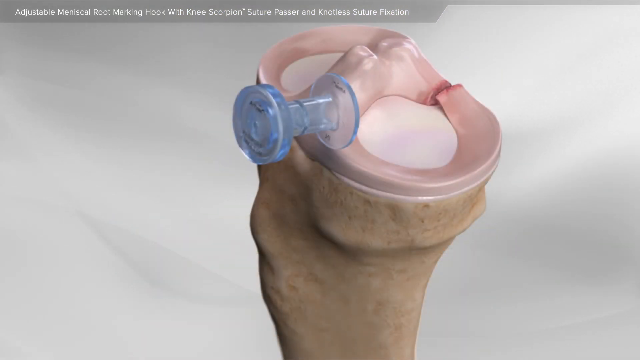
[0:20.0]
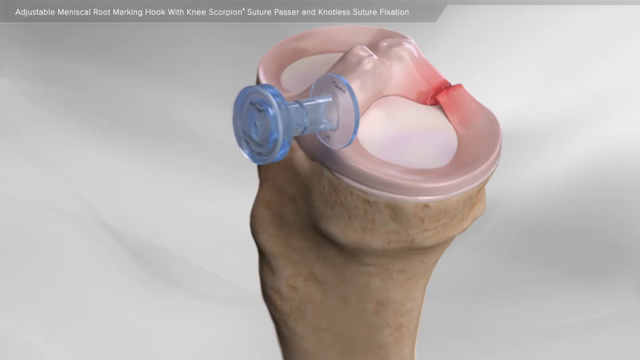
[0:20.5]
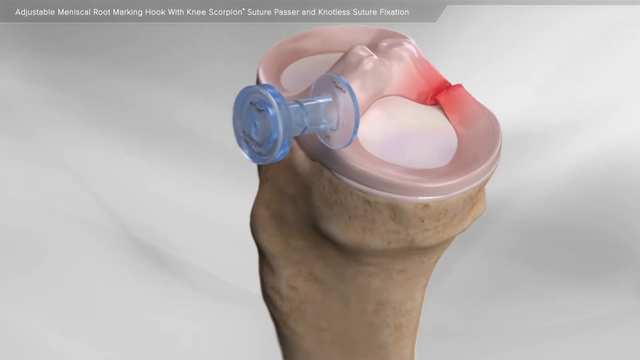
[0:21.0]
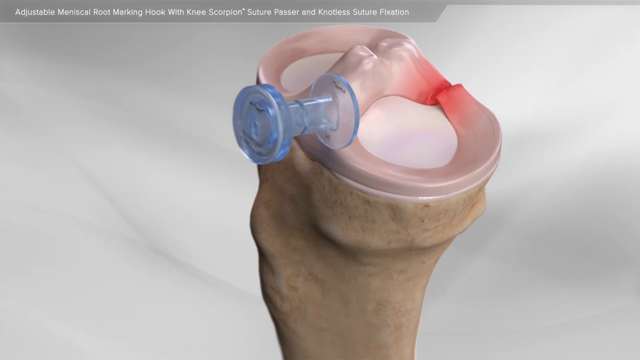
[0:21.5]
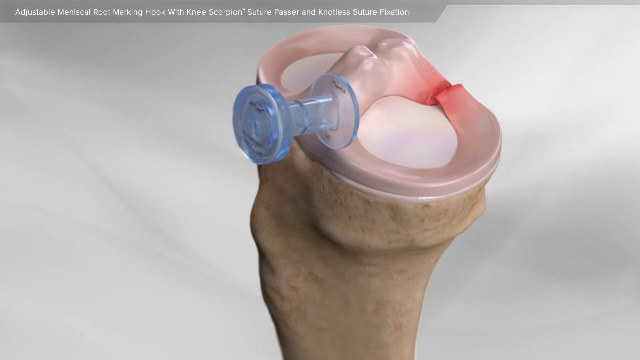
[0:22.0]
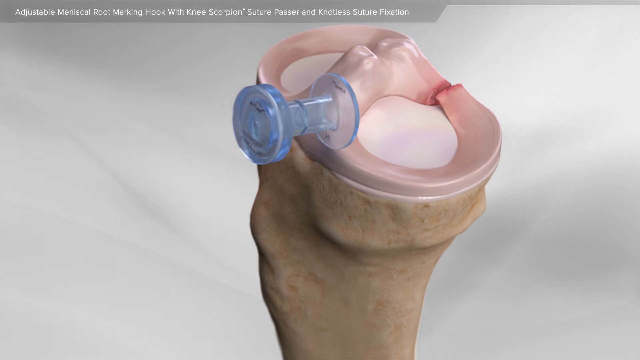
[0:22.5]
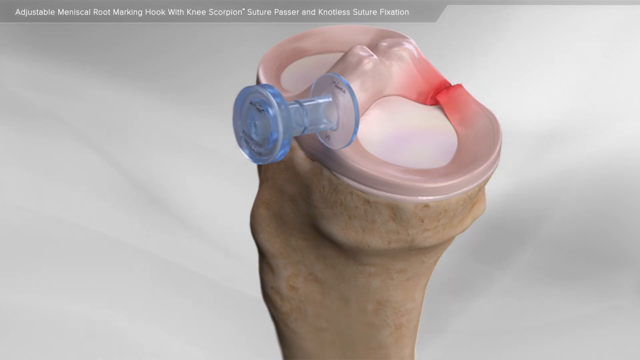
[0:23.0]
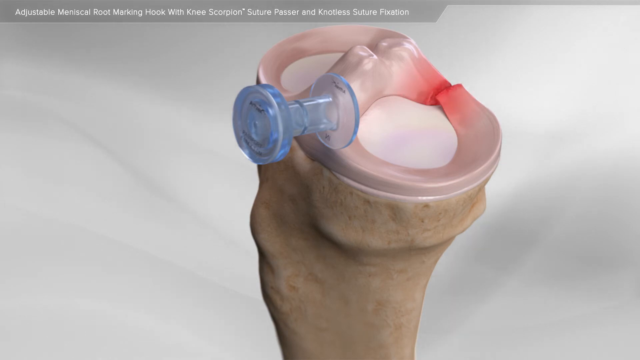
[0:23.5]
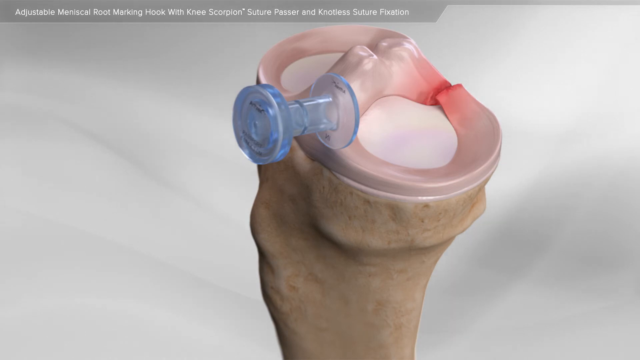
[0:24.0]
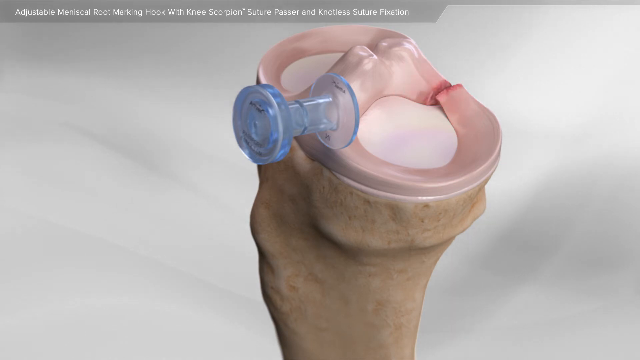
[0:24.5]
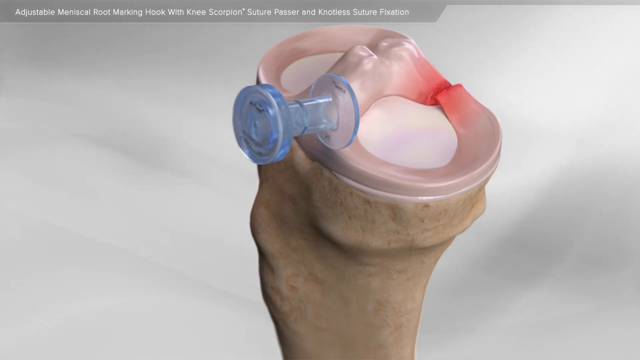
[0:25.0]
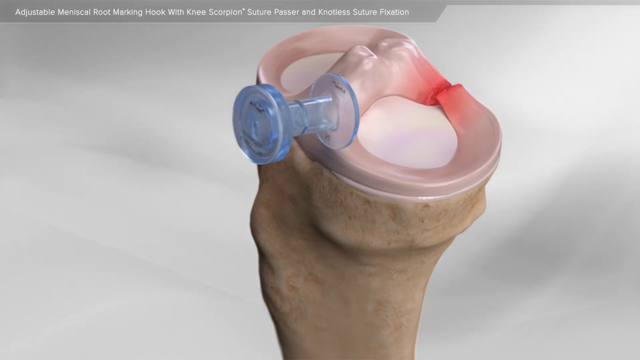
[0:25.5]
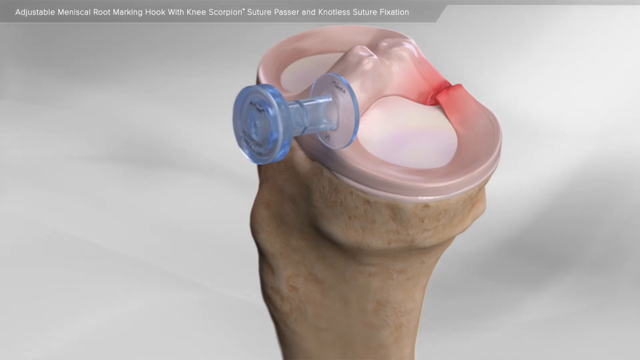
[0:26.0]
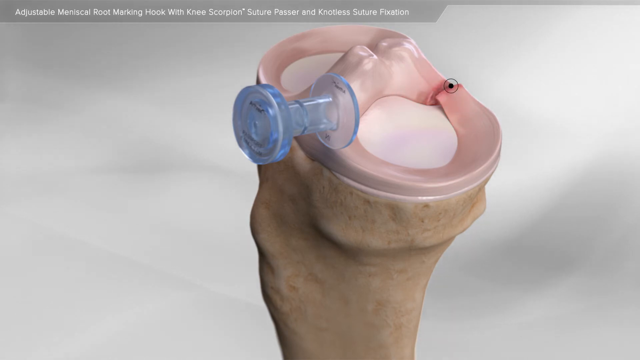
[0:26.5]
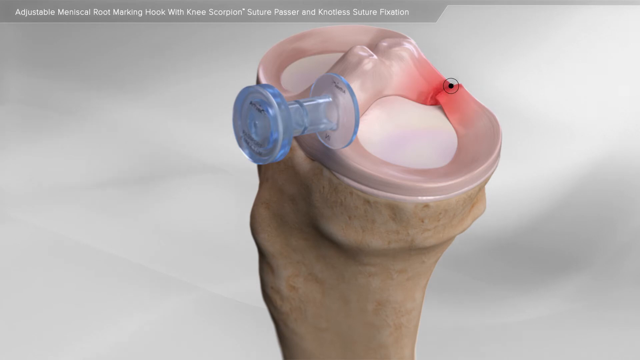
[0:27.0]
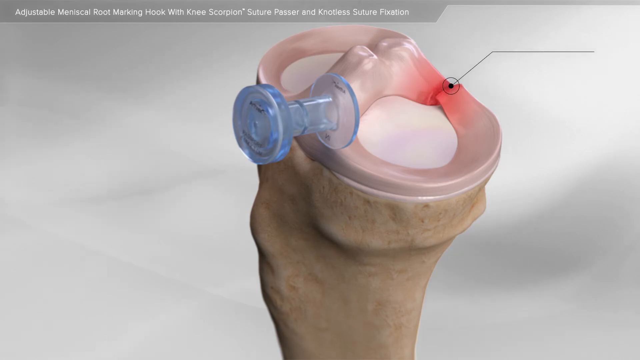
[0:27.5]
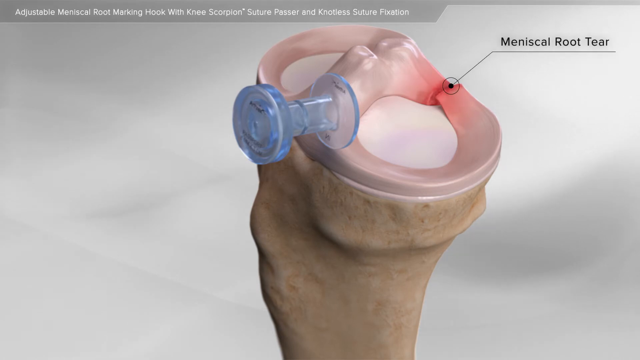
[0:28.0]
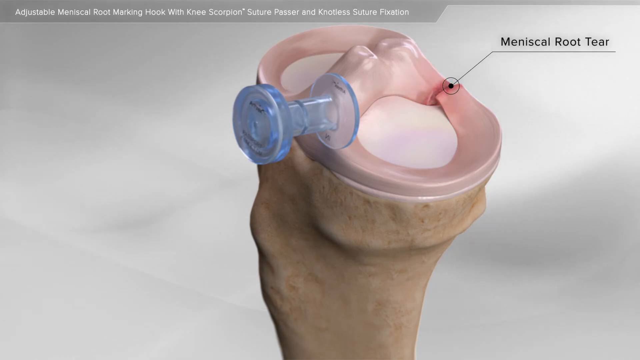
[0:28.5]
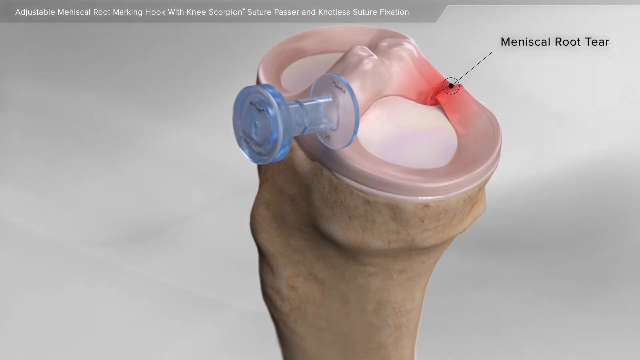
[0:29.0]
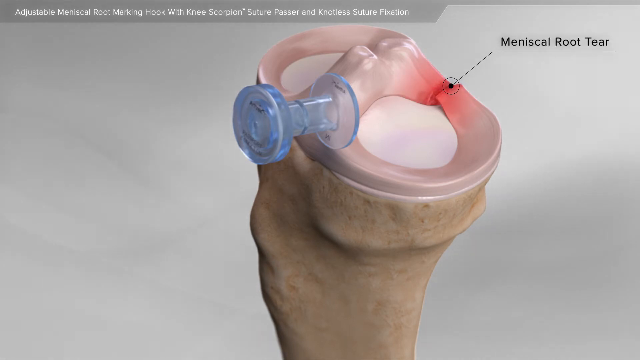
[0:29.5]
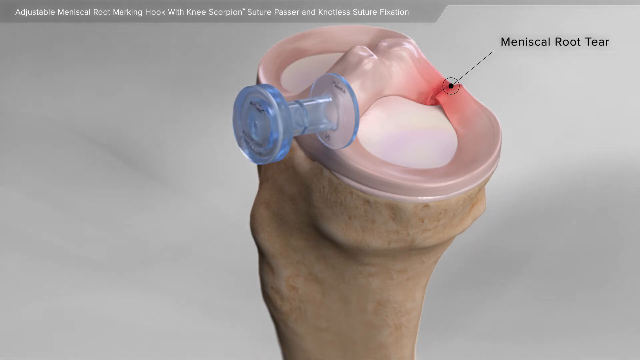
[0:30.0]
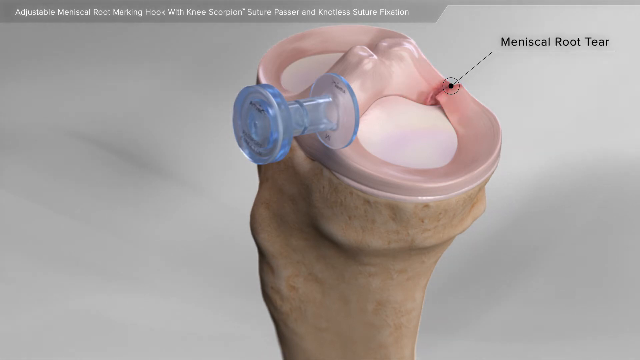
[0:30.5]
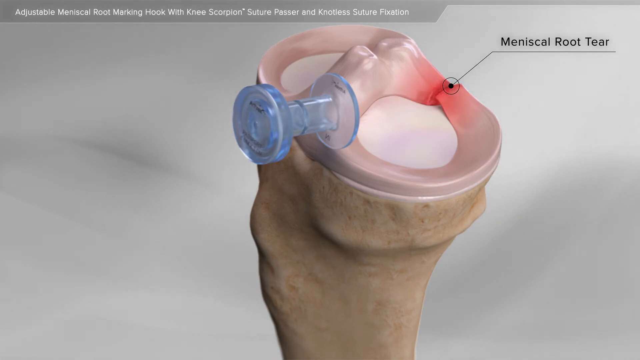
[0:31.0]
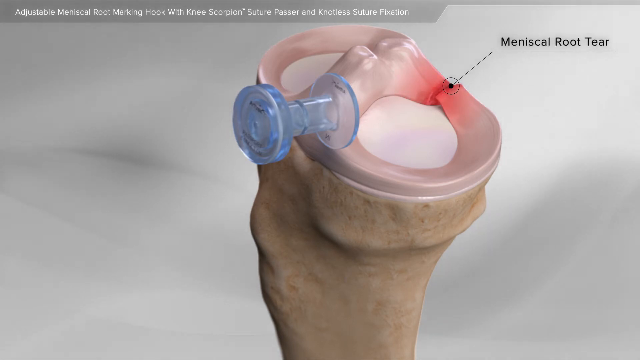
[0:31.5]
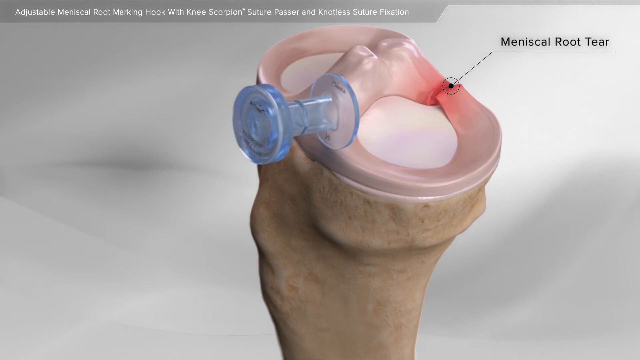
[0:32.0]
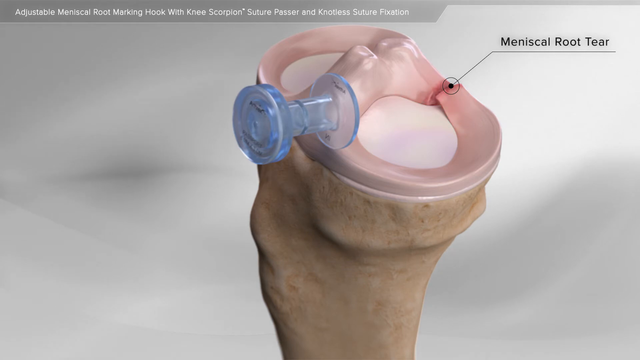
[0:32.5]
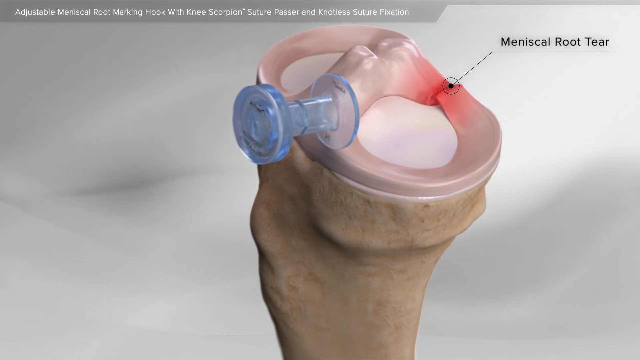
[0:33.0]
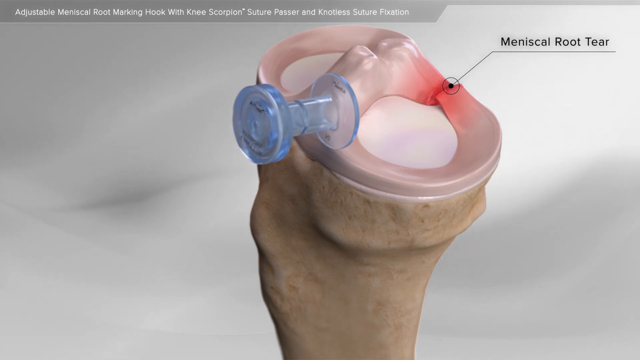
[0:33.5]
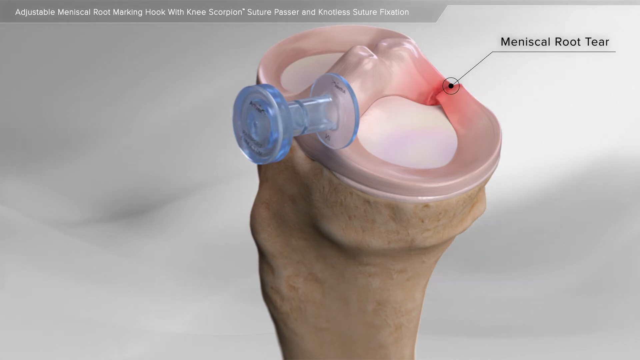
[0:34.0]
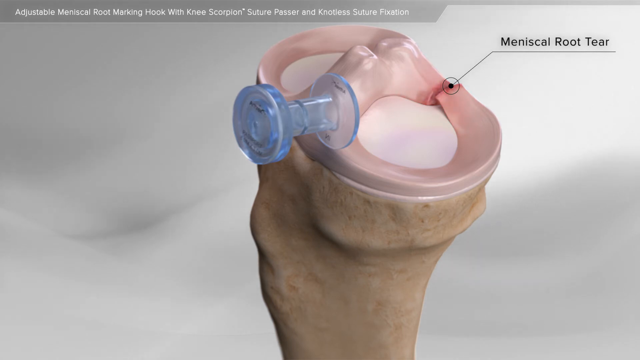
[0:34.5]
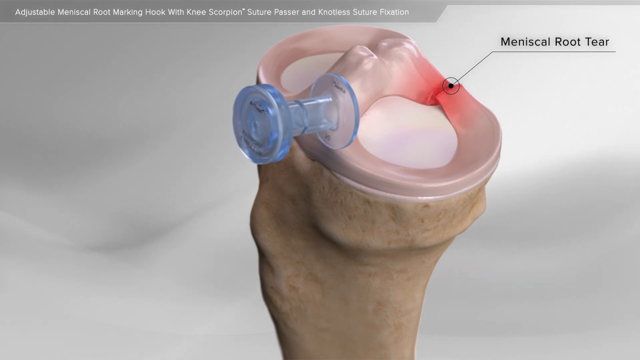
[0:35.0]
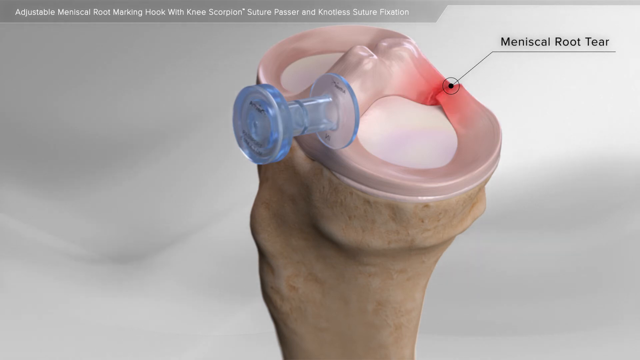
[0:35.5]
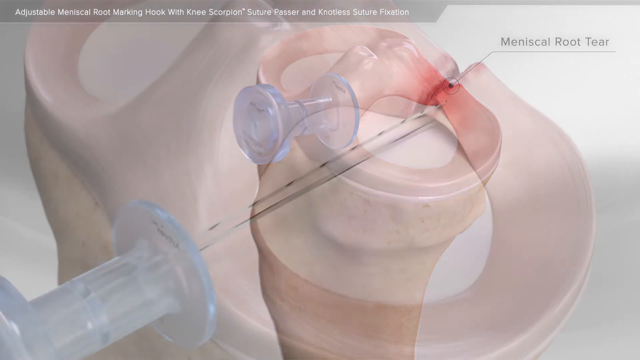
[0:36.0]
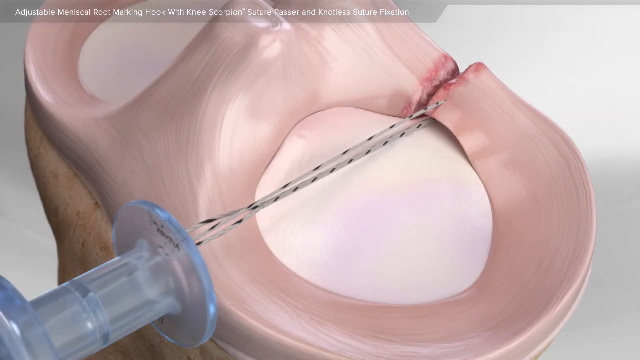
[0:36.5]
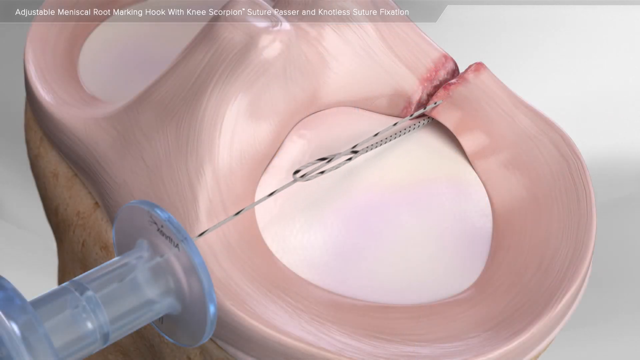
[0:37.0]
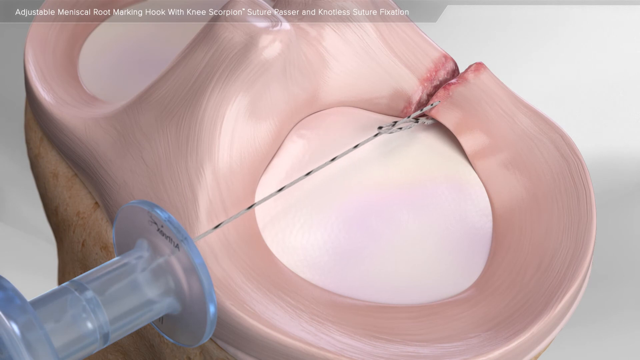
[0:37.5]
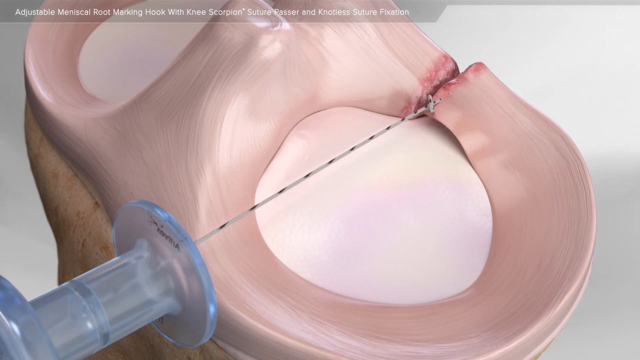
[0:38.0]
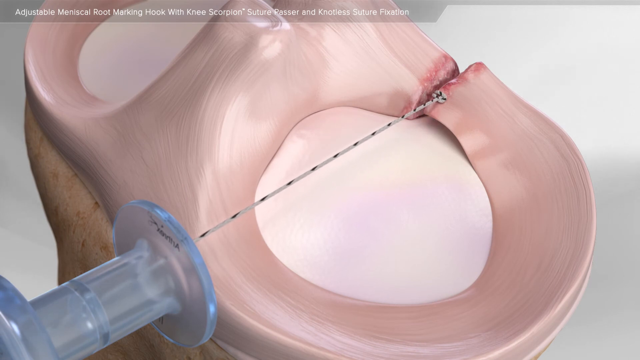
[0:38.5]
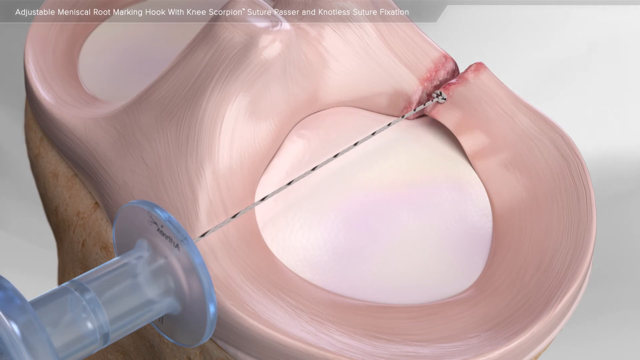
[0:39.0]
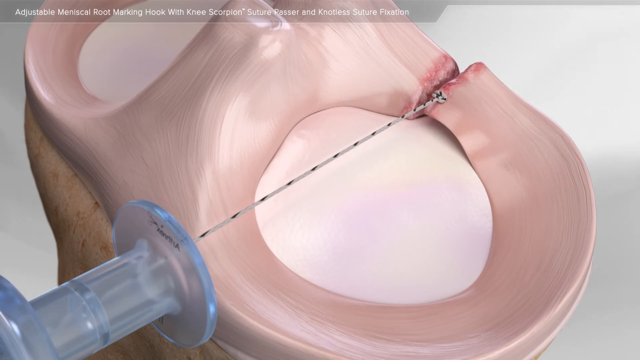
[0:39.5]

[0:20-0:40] A roughly top-down view shows the femur or the tibia and the middle stability sections. What appears to be a blue handle is on the left end, over a cutout of the knee area. The opposite end is highlighted in red, and that part of the knee seems broken: the right side is disconnected from the left and seems to point upwards, while the left points straight ahead. The red area flashes a few times, a black dot is attached to it, and text appears at the top right describing the issue, calling it a meniscal root tear. Nothing else happens for a while. Afterwards, something like a drill is placed through the blue handle on the left and attaches something like a stud onto the bone at the other end.